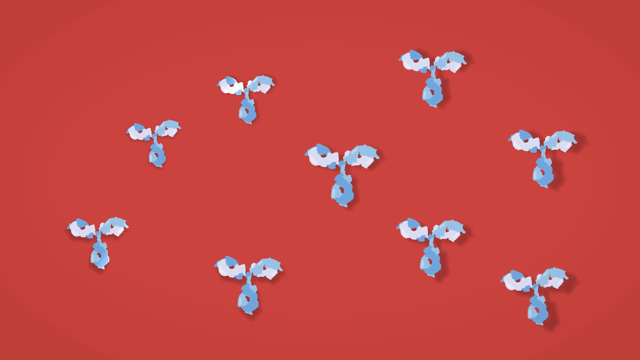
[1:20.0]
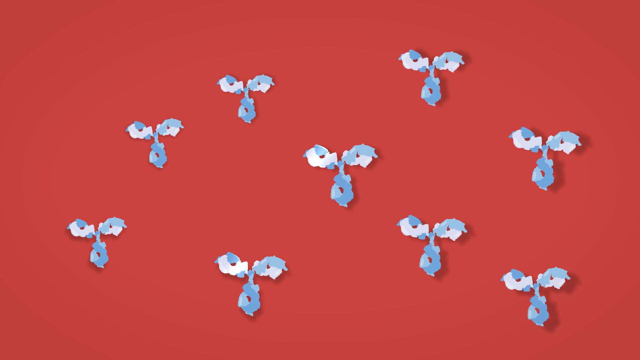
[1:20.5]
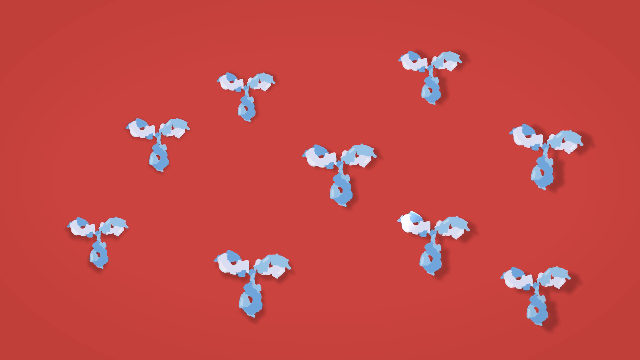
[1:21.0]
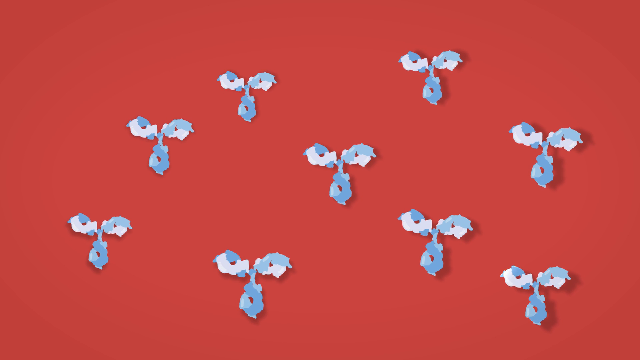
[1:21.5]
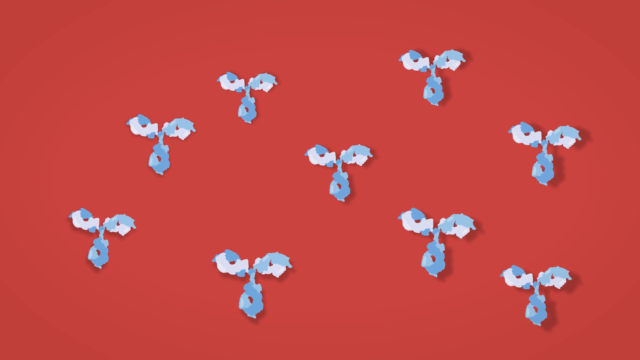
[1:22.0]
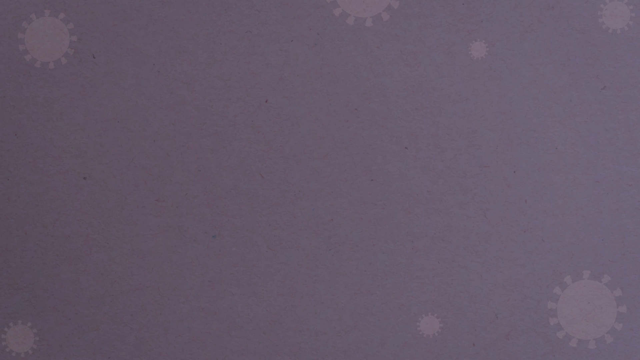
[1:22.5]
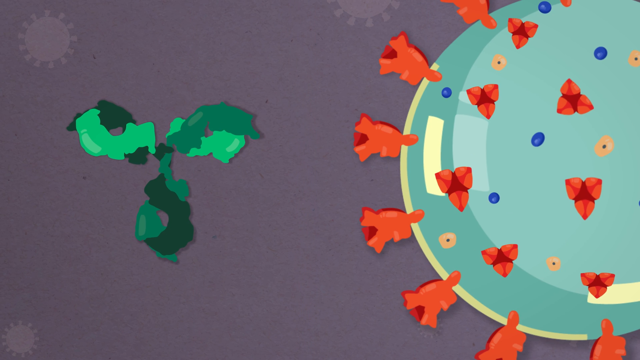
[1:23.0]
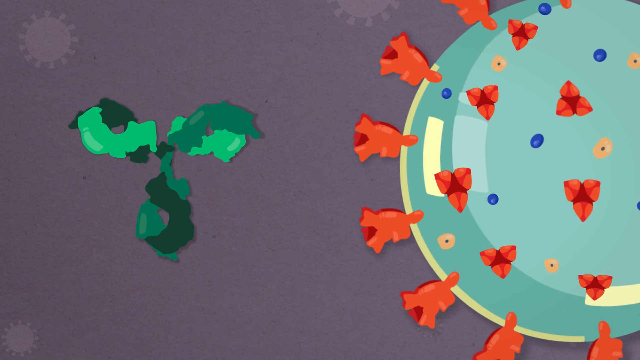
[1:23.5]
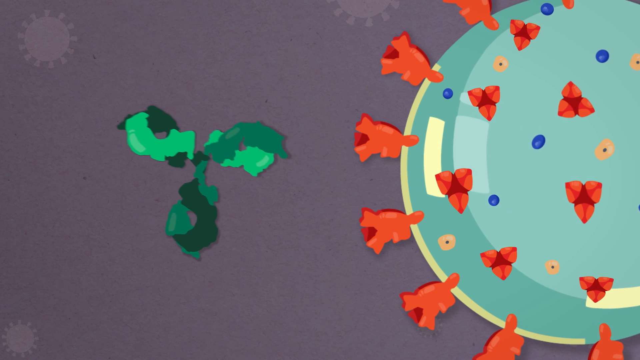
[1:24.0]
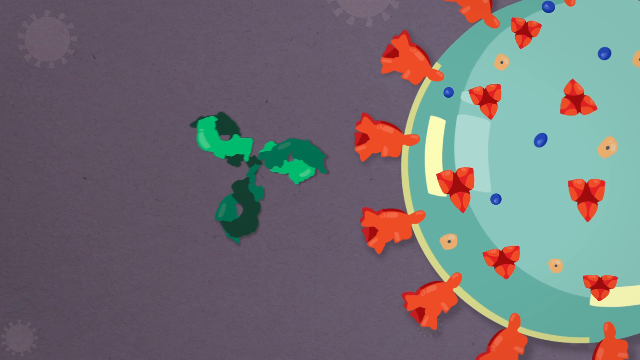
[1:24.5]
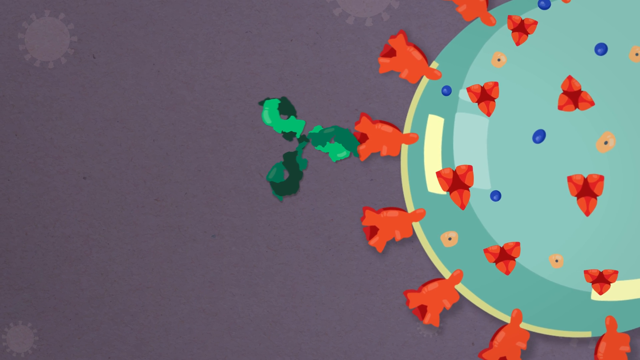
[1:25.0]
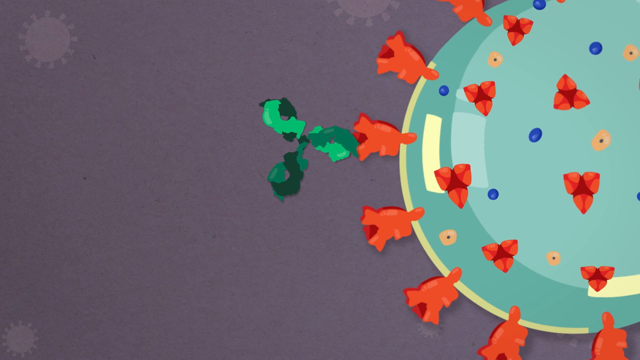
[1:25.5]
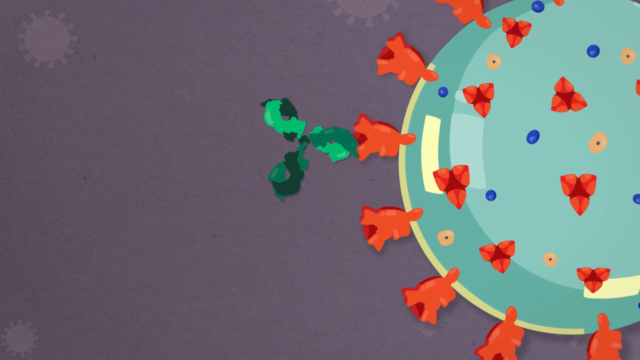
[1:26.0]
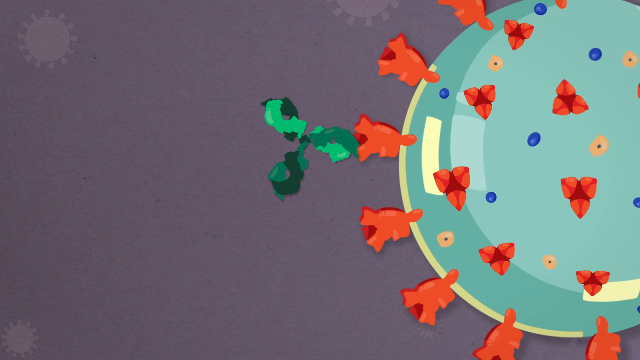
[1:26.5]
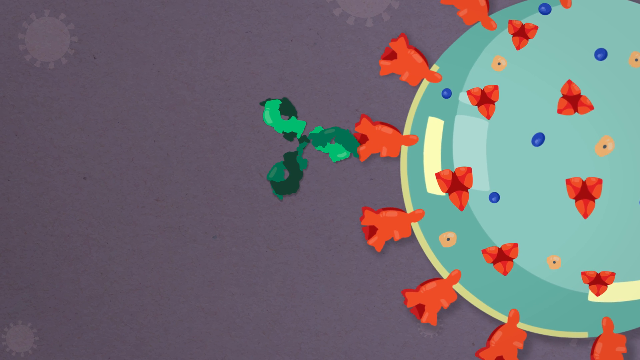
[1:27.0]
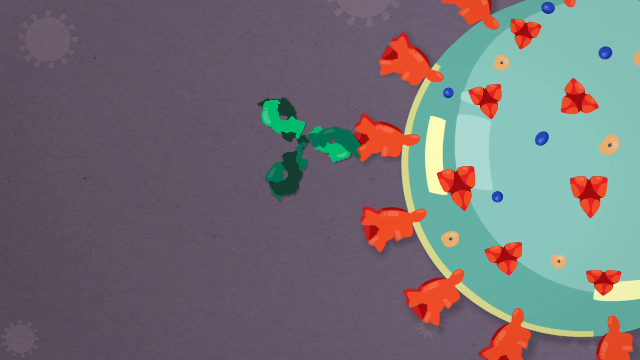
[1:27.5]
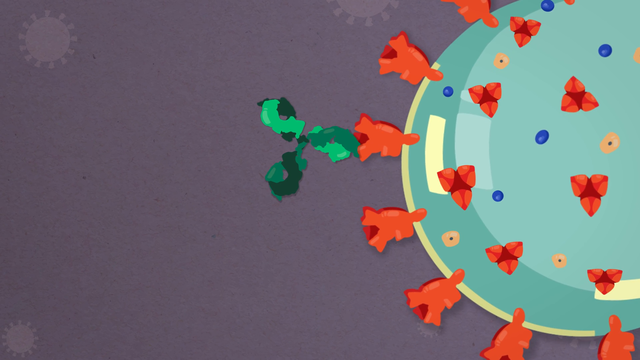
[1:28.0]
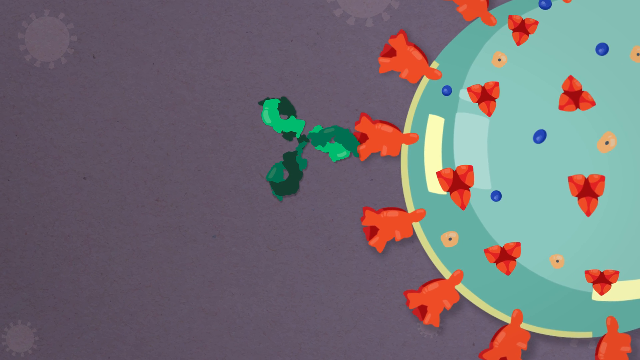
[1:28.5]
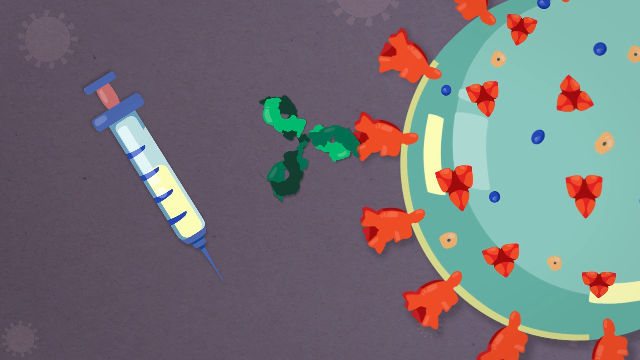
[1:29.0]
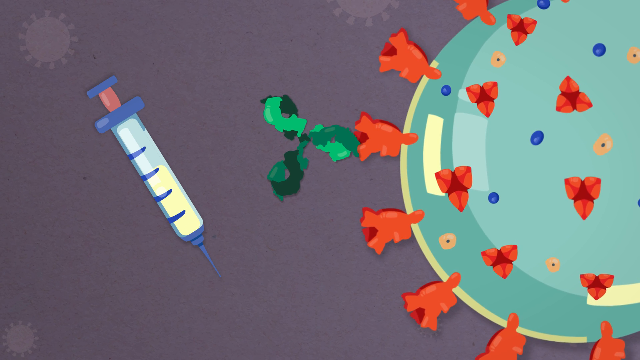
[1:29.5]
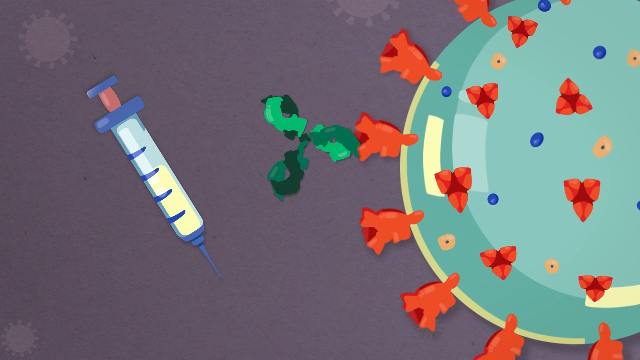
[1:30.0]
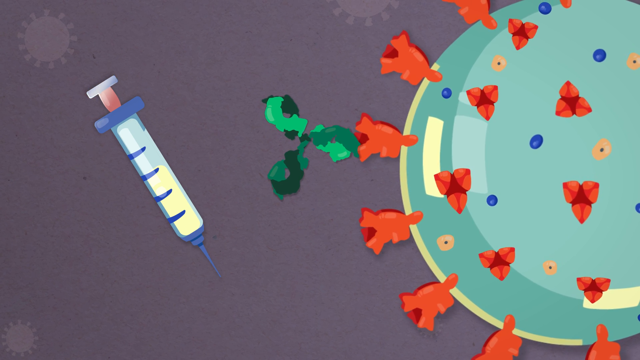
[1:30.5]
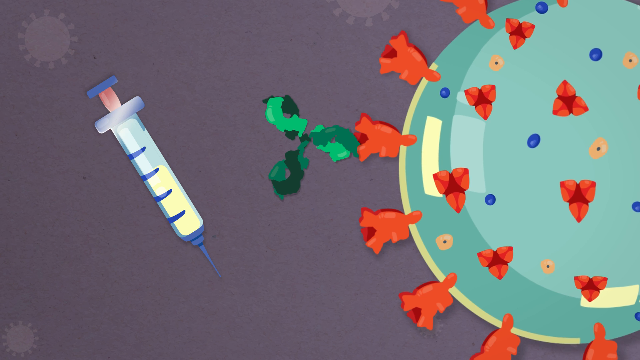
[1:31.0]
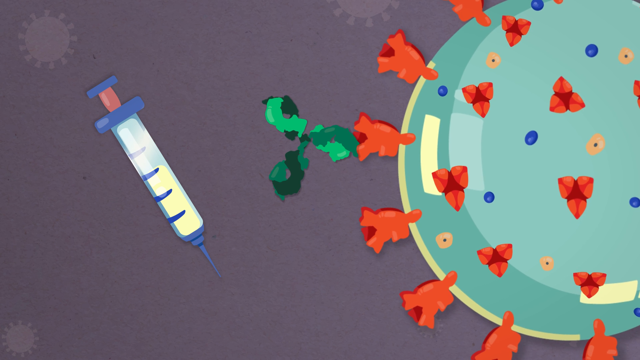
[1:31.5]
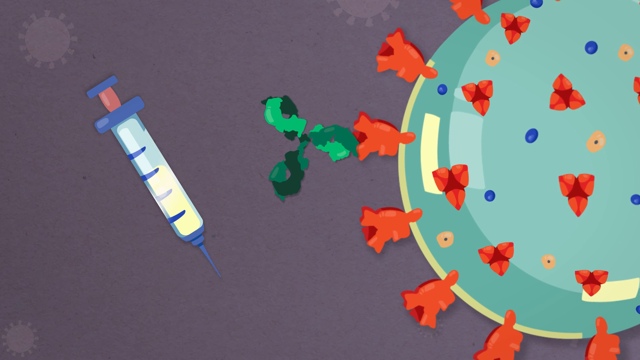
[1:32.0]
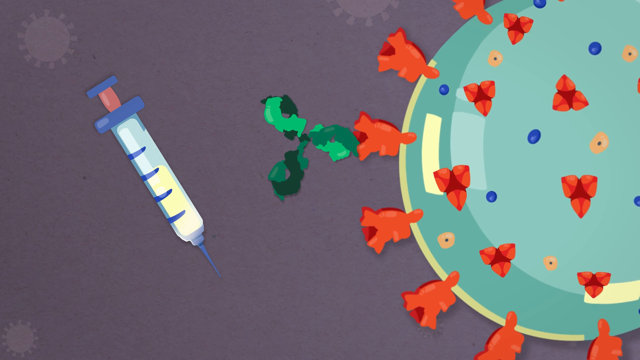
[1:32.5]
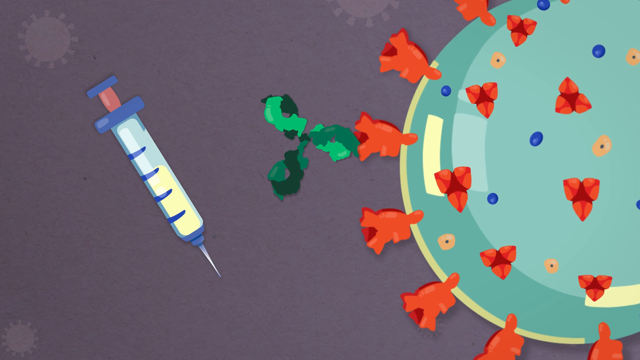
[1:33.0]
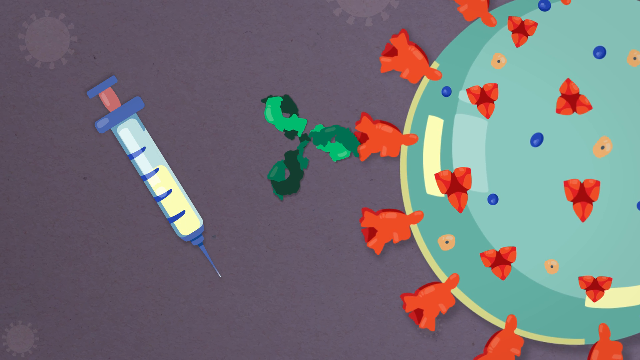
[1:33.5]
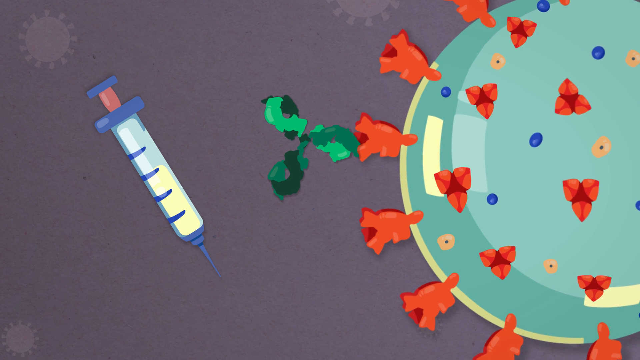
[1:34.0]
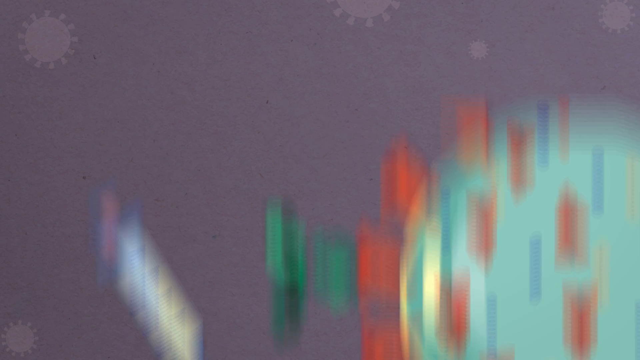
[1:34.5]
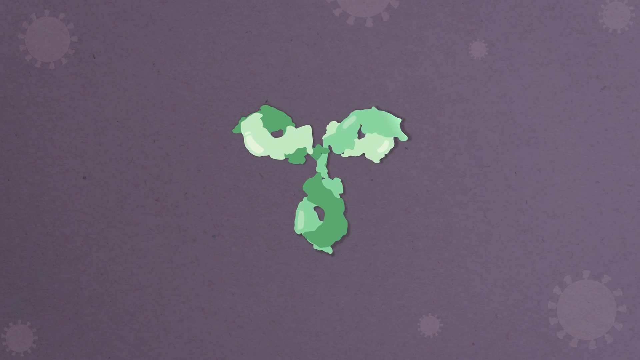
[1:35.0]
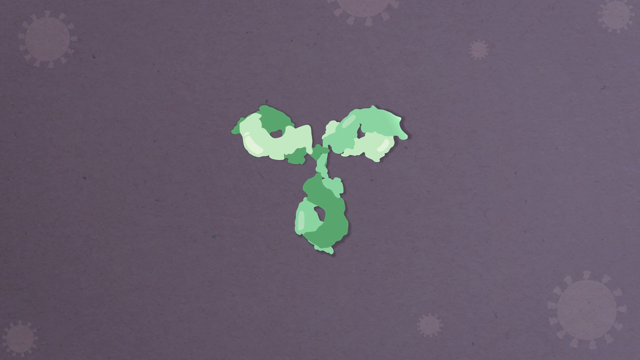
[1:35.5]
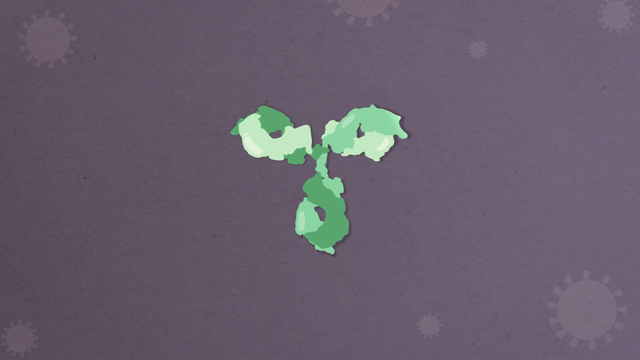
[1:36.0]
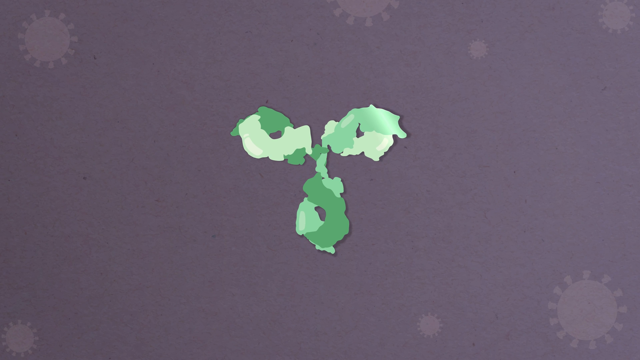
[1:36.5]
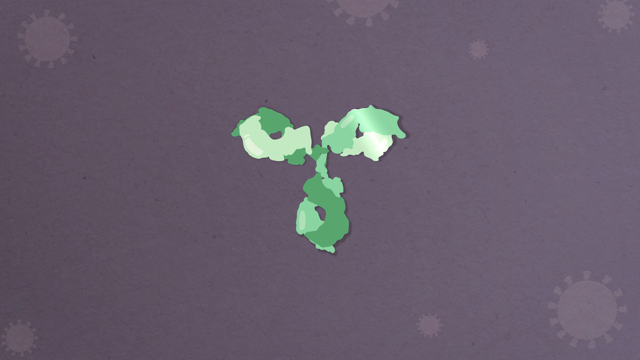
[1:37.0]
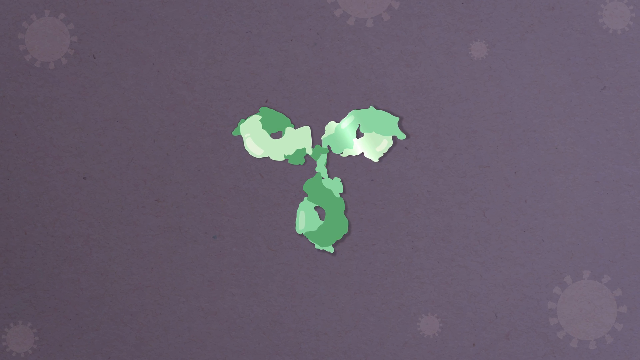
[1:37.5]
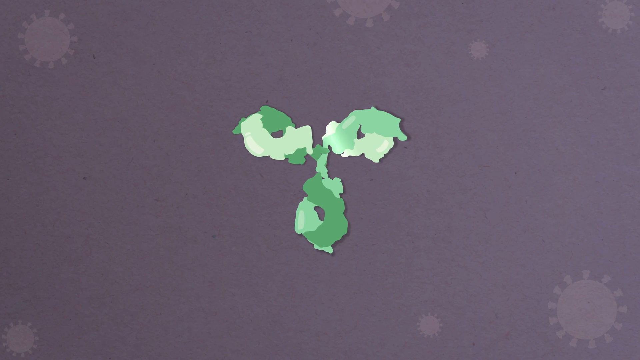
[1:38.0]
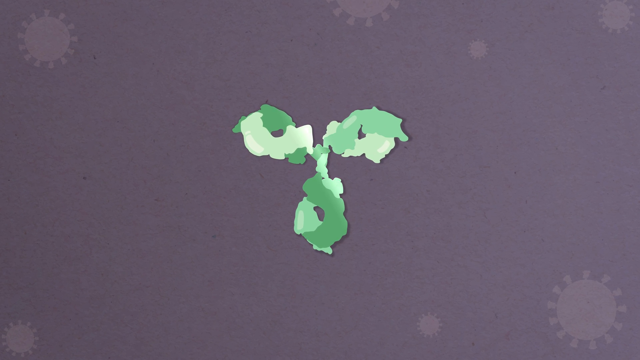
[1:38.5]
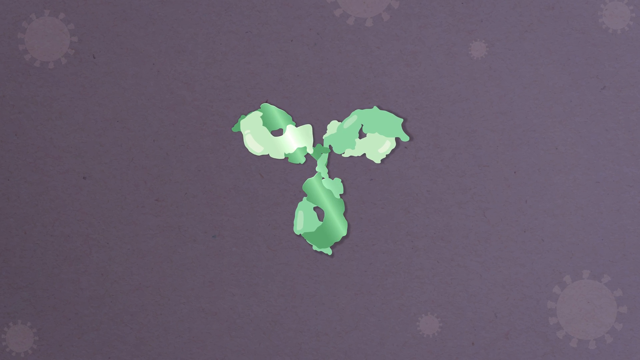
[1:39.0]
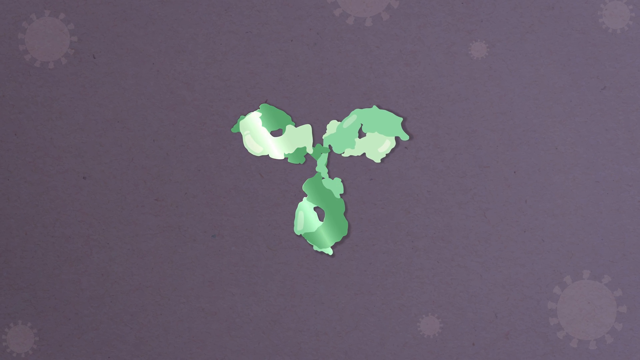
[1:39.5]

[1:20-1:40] Nine blue antibody-like figures, in light blue and dark blue, are on a maroon background. The next screen shows a light and dark green antibody moving toward a cell that is multicolored with green, blue, orange and yellow. Once the antibody reaches the cell, a blue and clear syringe pops up on the screen, with a yellow substance inside, blue measuring lines on its side, and a purple and blue part that is pushed down. On the next screen, a single two-toned light and dark green antibody is shown on a dark charcoal gray background with lighter gray cells.